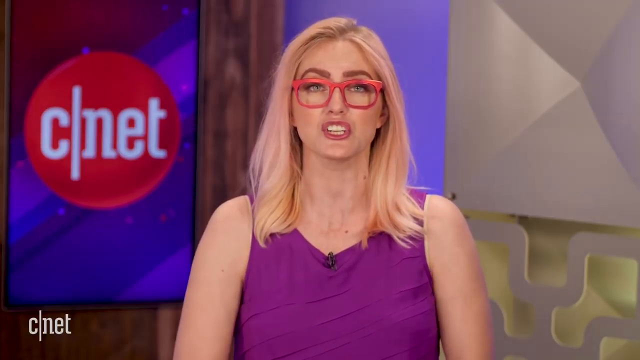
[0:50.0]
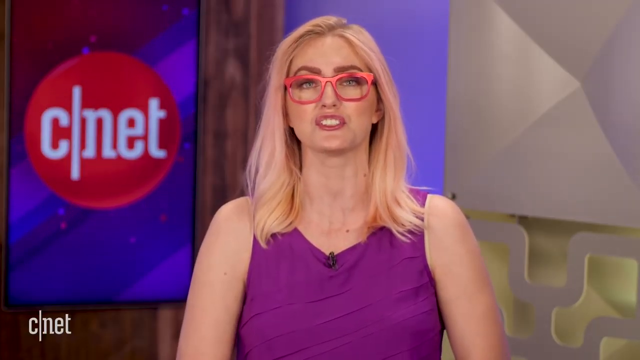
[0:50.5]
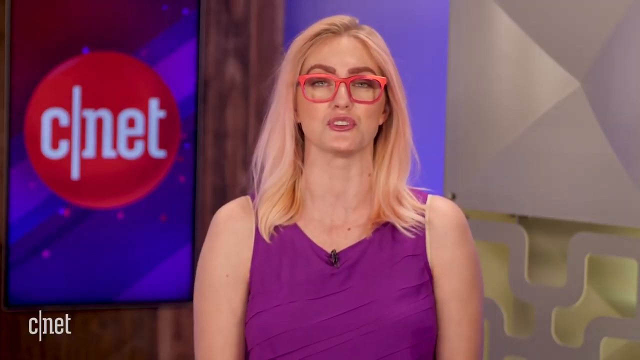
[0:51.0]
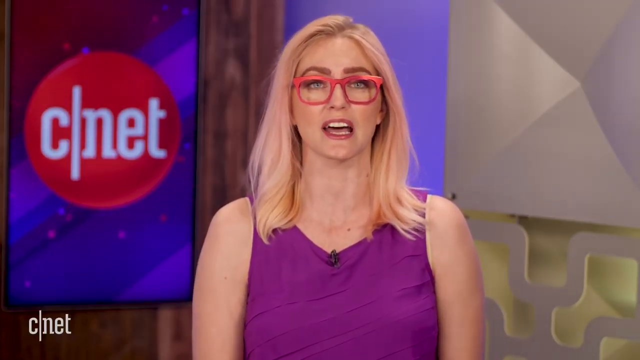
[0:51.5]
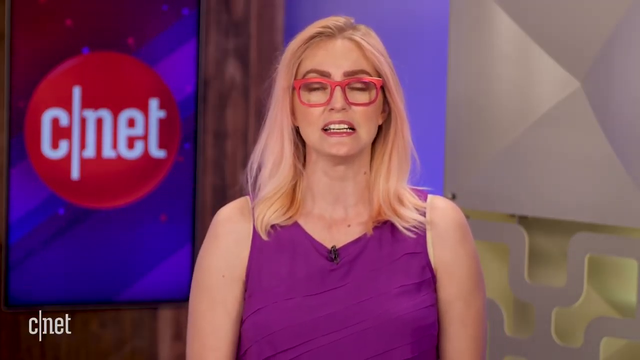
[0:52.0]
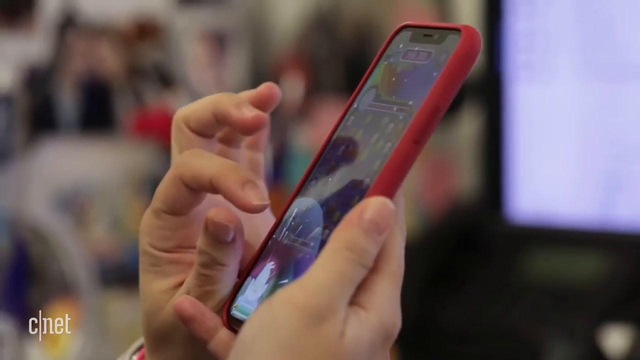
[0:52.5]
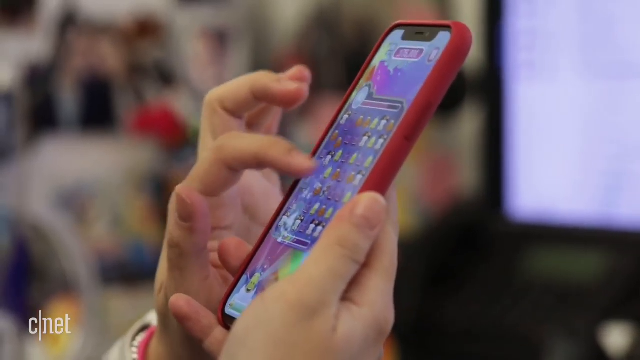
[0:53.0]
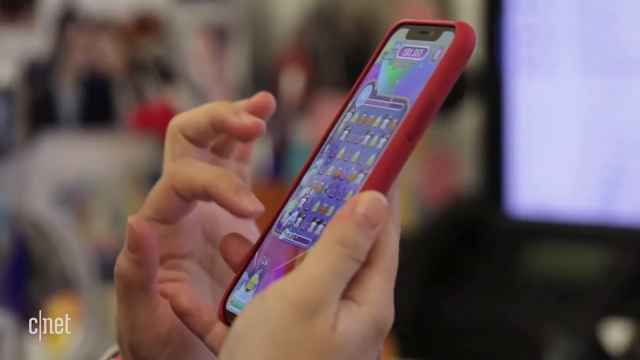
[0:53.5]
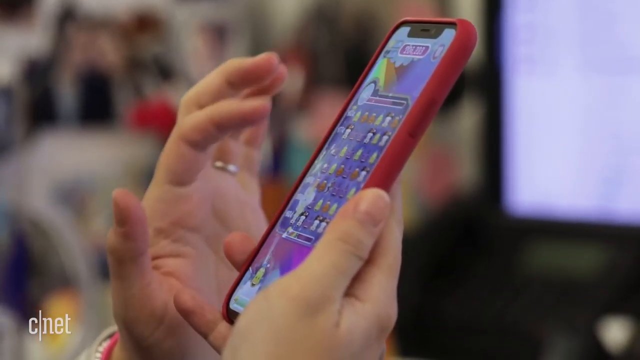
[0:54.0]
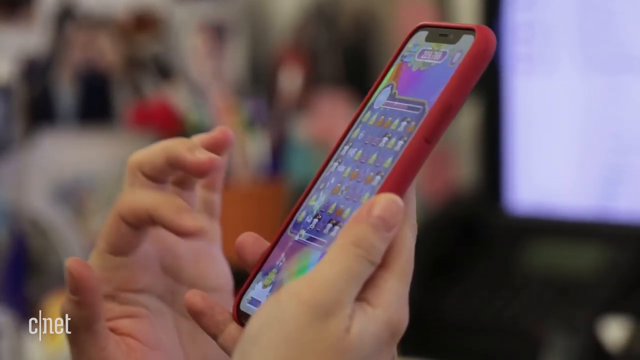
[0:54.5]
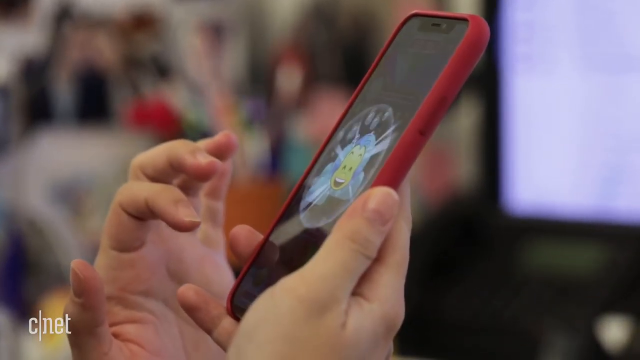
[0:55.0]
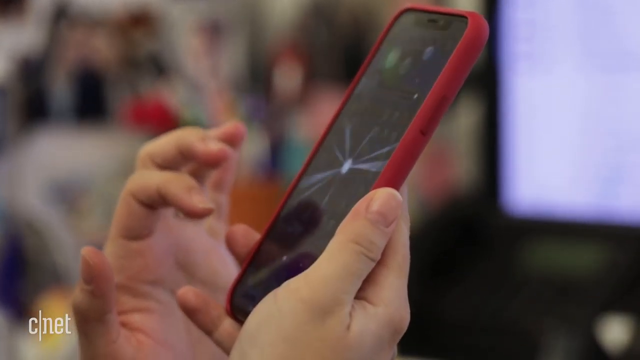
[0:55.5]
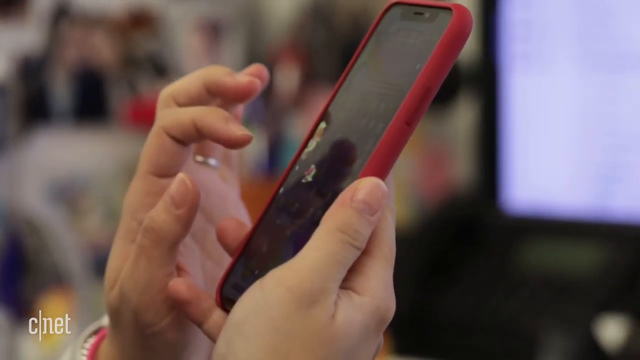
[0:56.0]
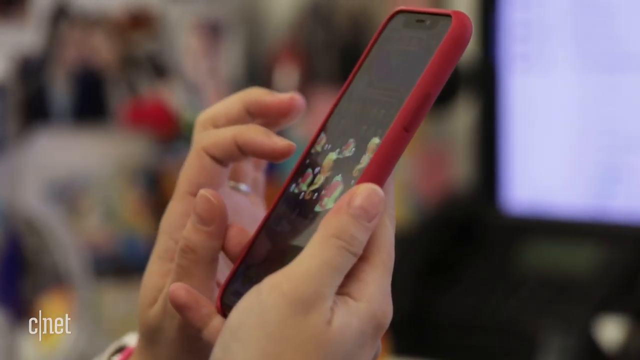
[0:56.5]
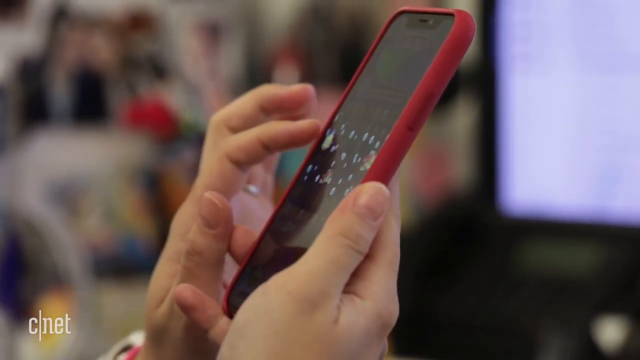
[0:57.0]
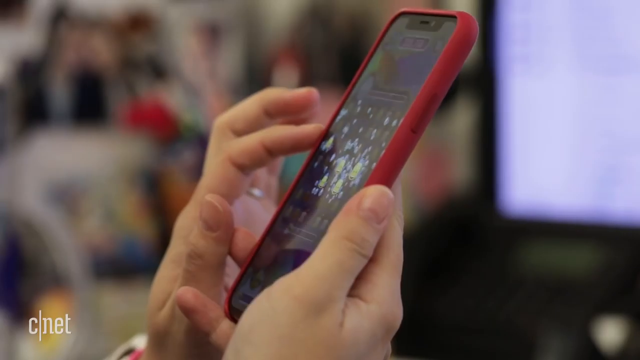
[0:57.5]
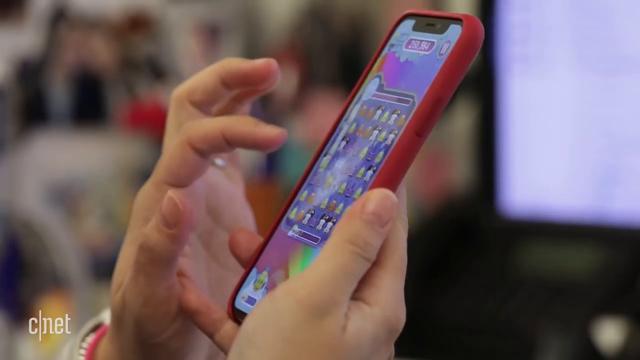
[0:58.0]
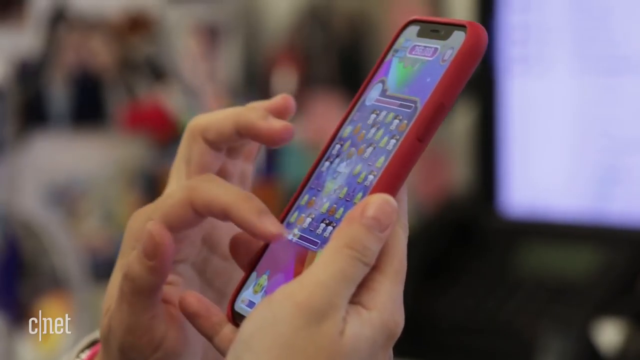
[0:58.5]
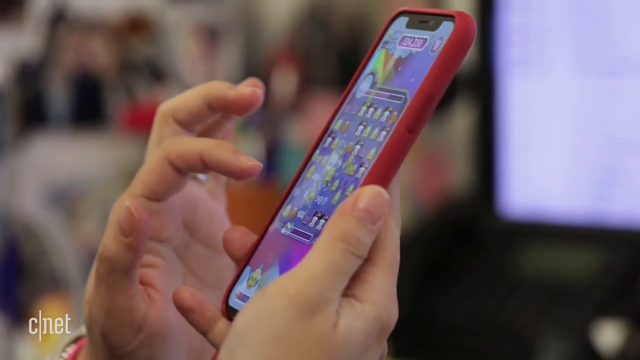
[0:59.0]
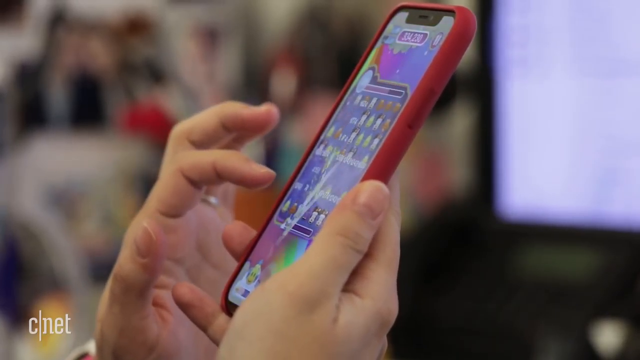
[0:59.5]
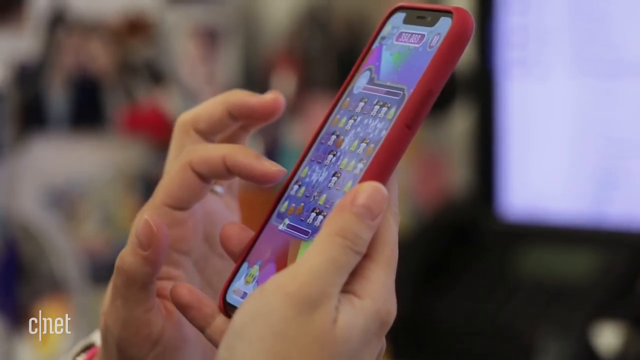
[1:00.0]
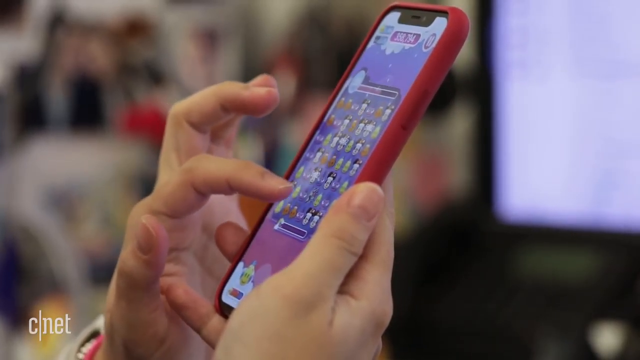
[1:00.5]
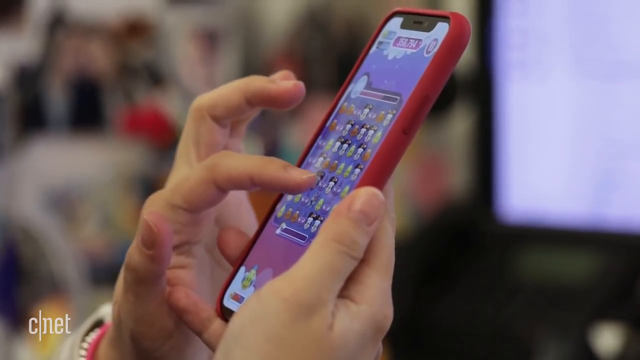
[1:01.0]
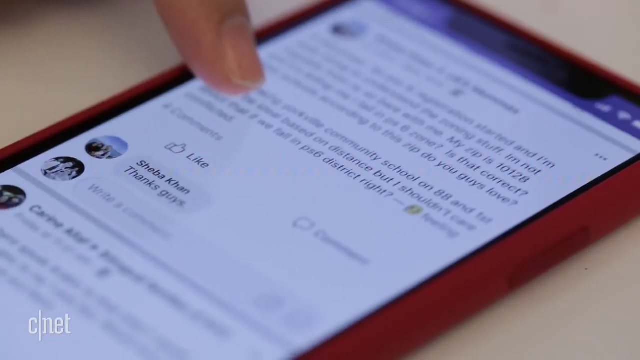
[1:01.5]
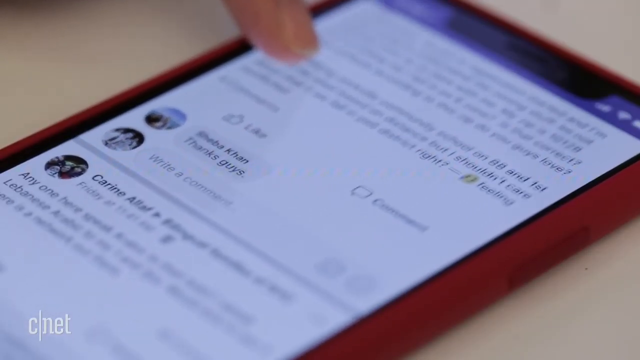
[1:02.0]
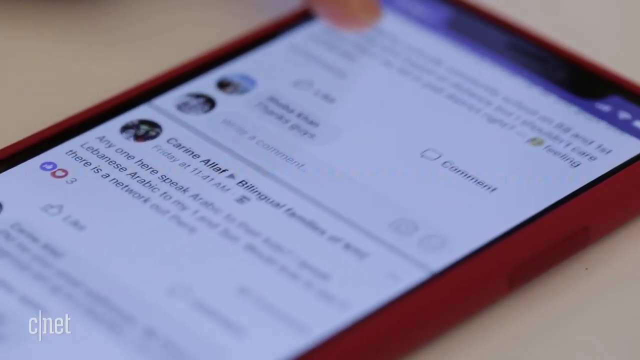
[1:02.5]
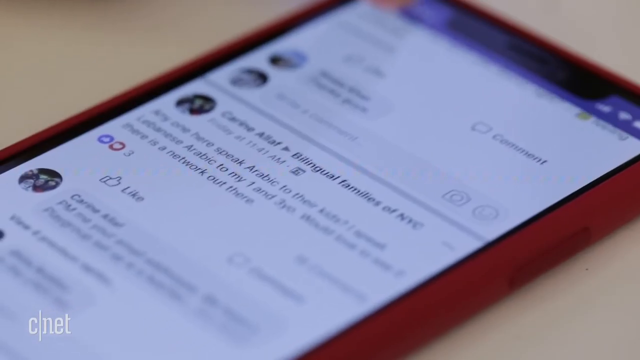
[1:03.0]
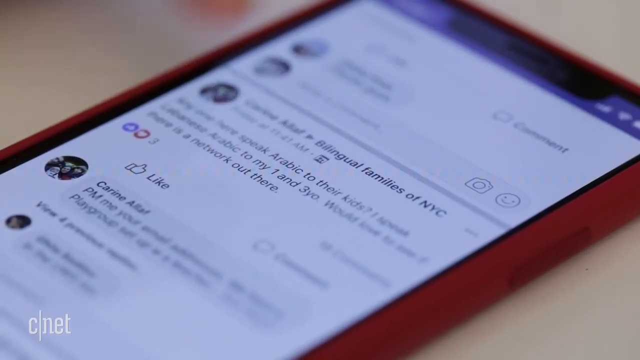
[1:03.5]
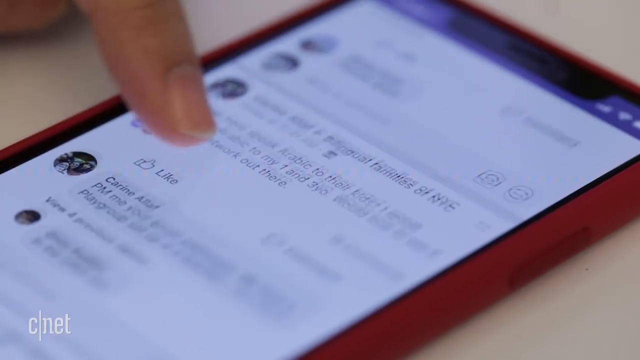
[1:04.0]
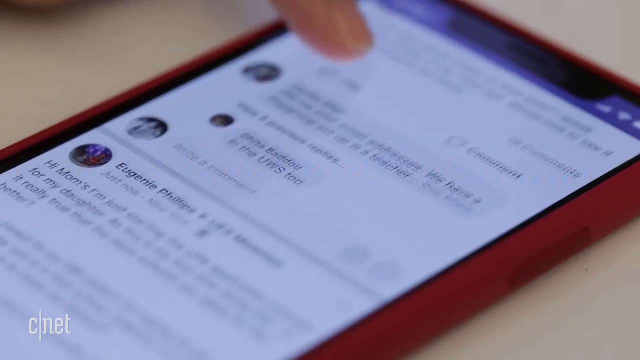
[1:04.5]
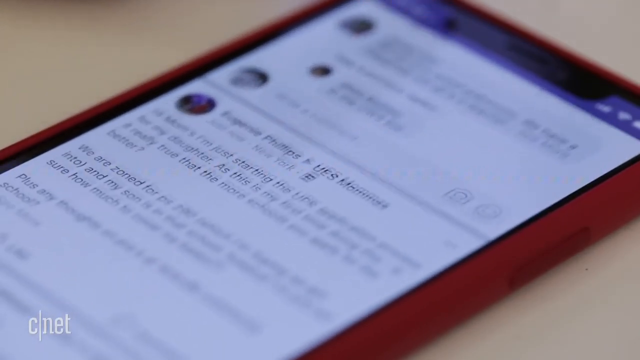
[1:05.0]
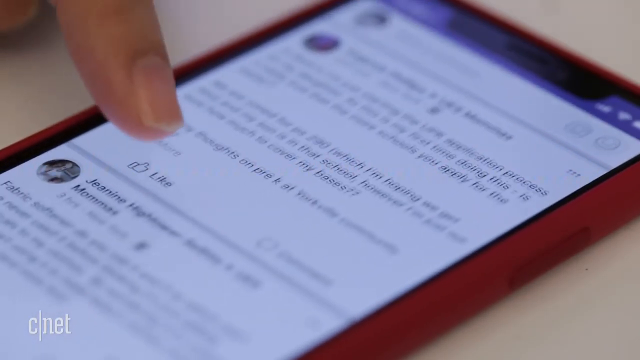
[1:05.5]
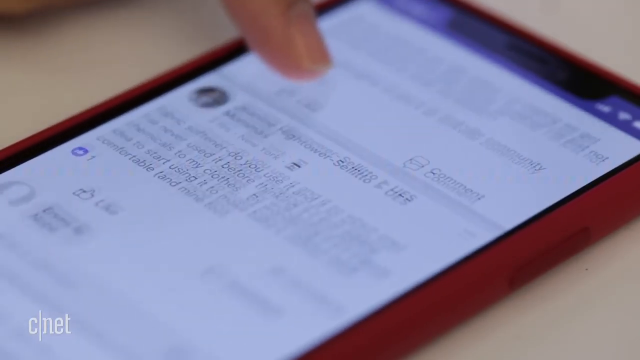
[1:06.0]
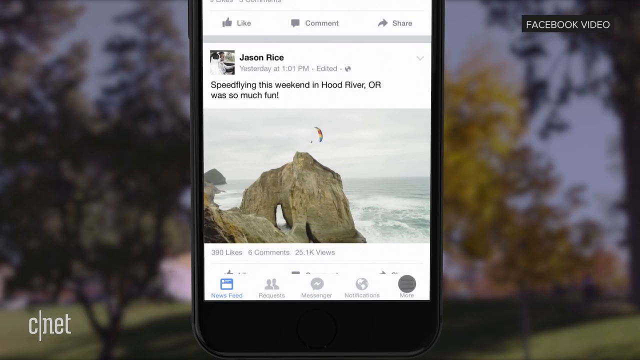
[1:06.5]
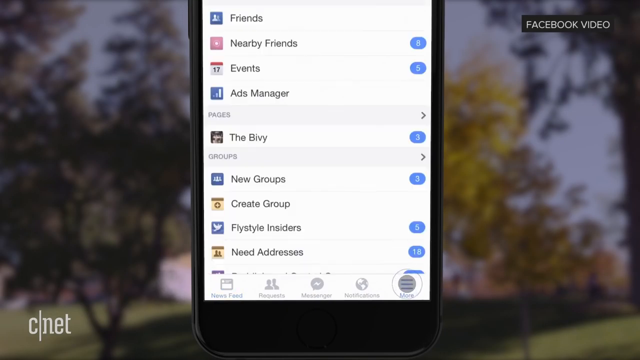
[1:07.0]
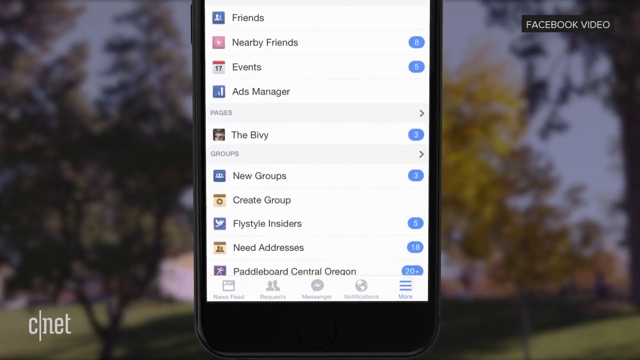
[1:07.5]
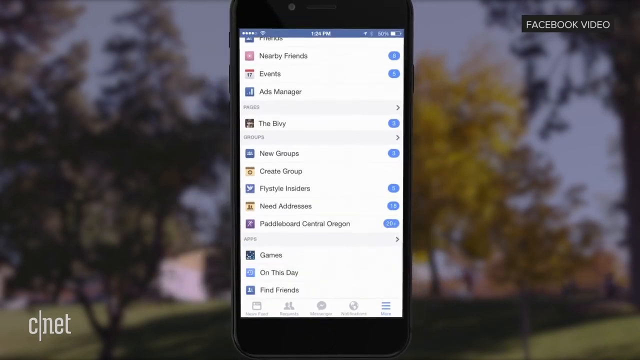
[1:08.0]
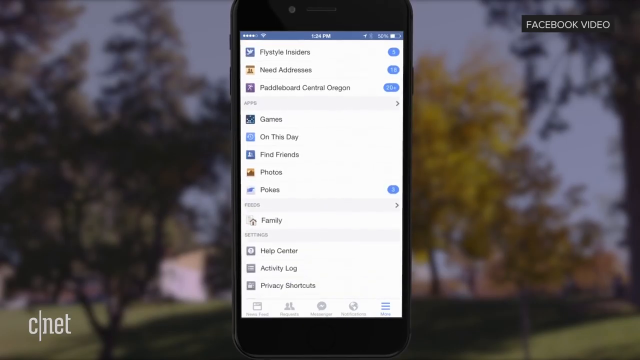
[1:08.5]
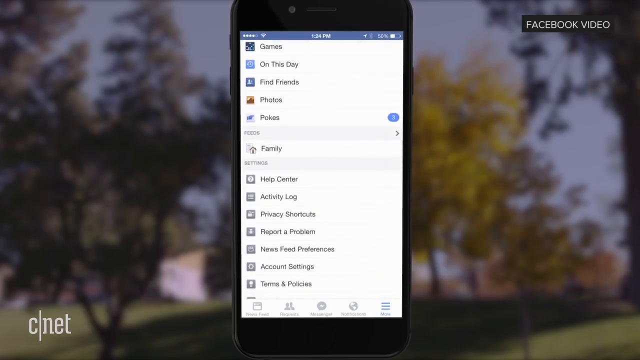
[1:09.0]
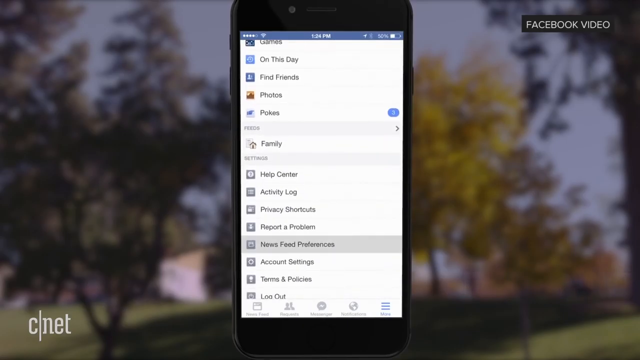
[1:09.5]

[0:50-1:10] The woman appears first, followed by someone holding a red phone and scrolling through it; a video is briefly shown, then the phone's apps. The person appears to click on Facebook and scrolls through posts with their left finger. The person seems to be a man wearing a wedding ring; the background is blurred, and he looks like he is sitting in front of a computer. He scrolls through his friends' posts or posts on his page, a little bit of an ocean is visible, and then the phone goes to app settings. He appears to click on something about a news feed, possibly changing news feed settings. The video then returns to the woman at CNET.